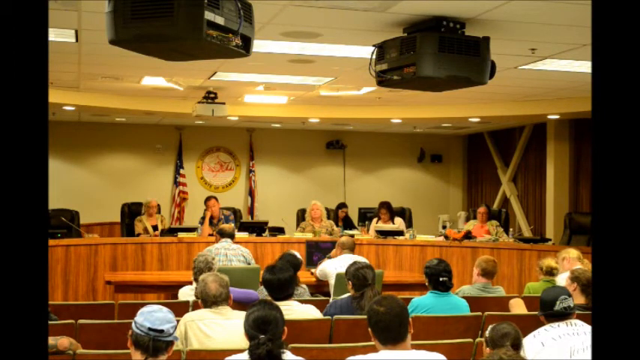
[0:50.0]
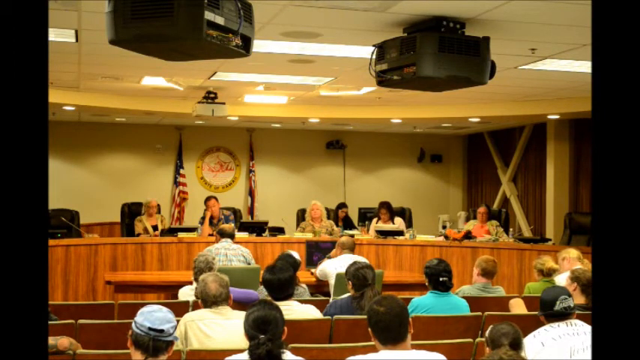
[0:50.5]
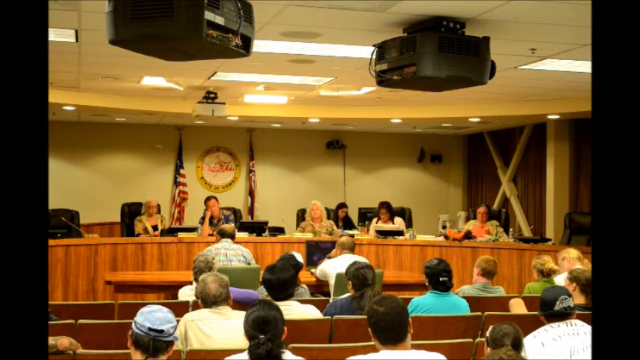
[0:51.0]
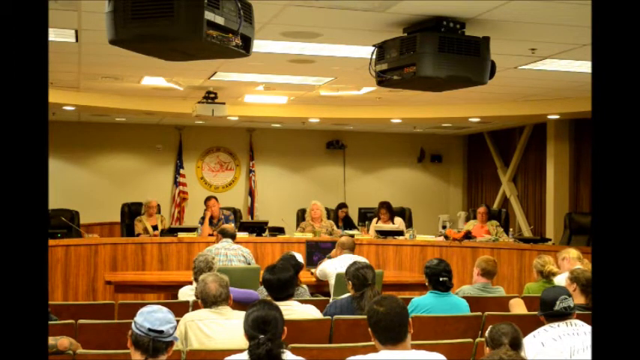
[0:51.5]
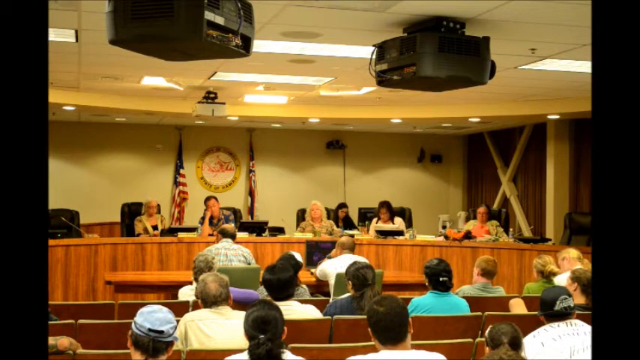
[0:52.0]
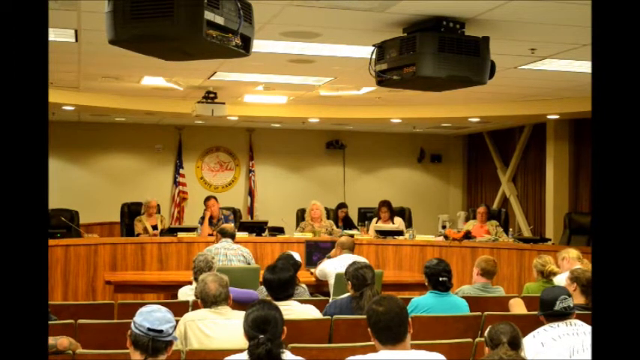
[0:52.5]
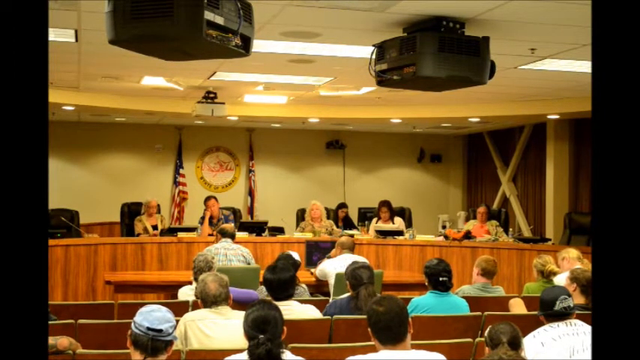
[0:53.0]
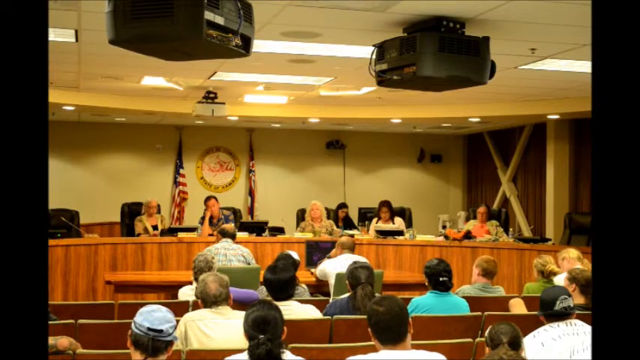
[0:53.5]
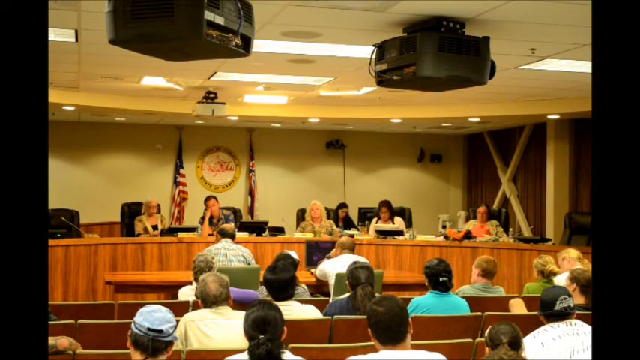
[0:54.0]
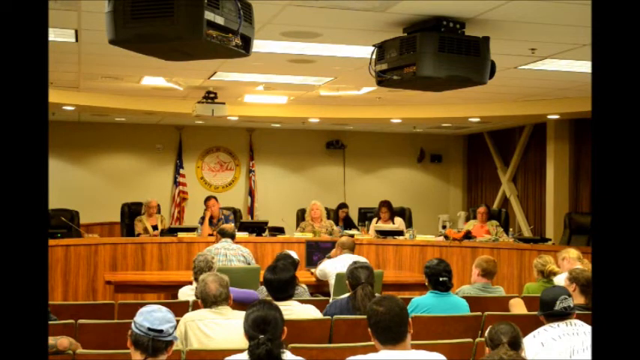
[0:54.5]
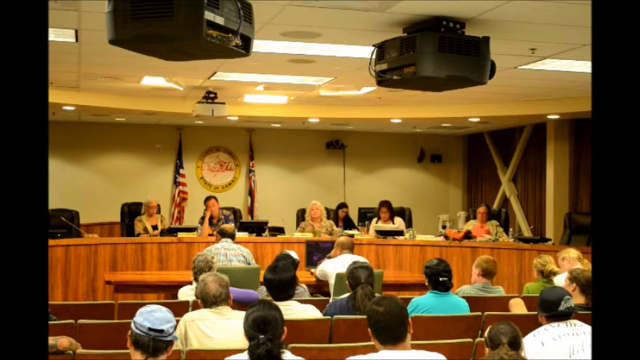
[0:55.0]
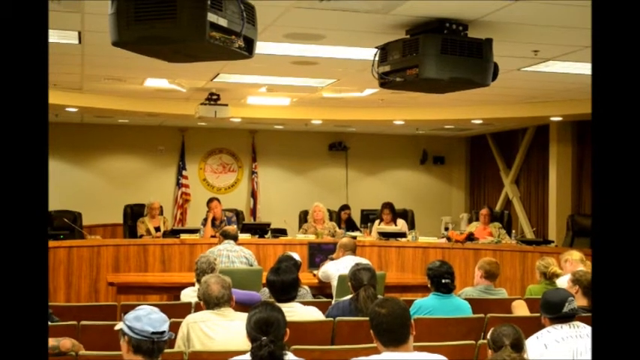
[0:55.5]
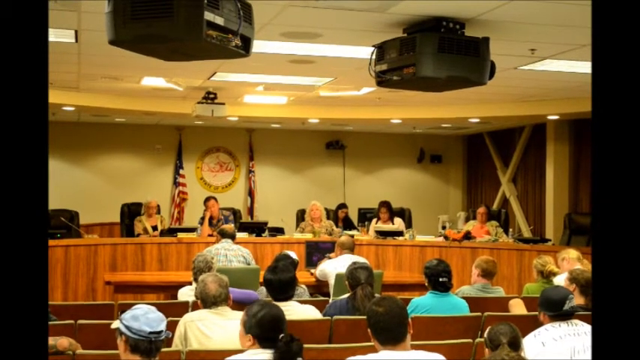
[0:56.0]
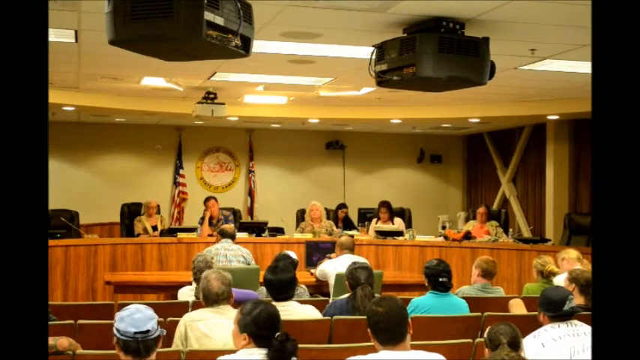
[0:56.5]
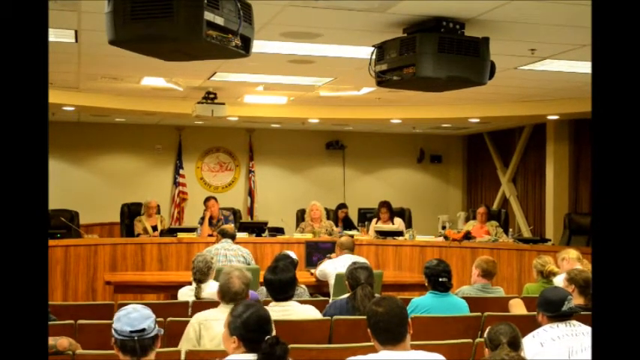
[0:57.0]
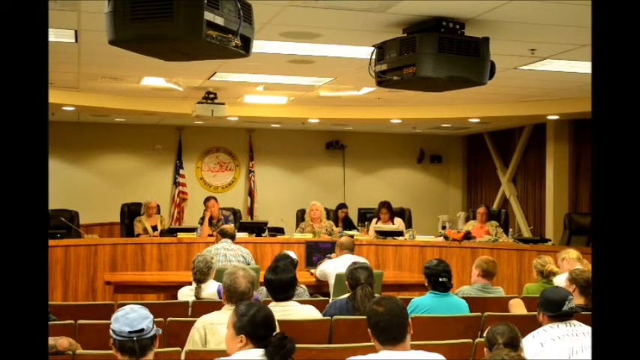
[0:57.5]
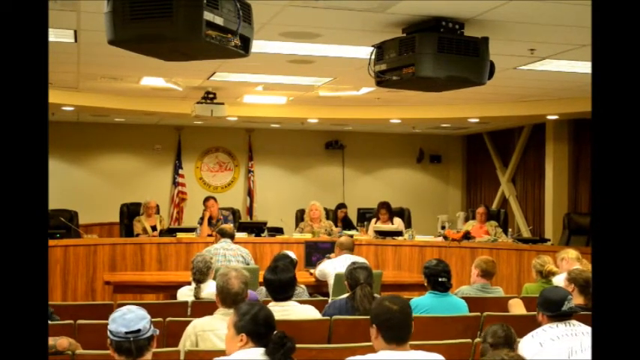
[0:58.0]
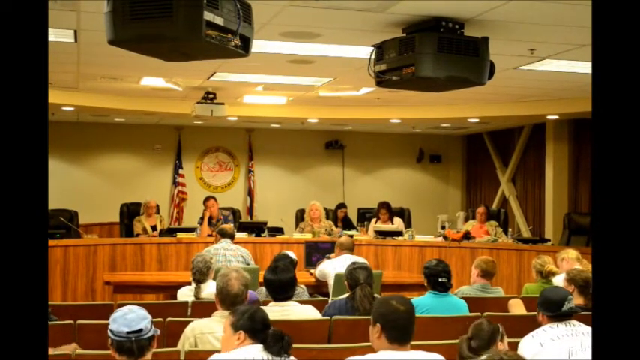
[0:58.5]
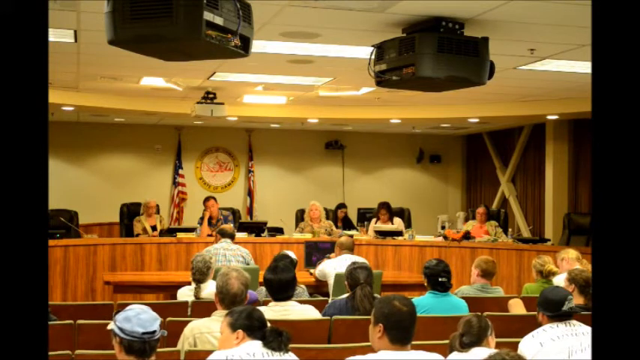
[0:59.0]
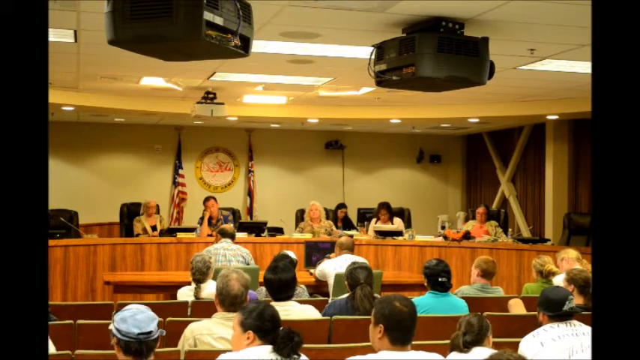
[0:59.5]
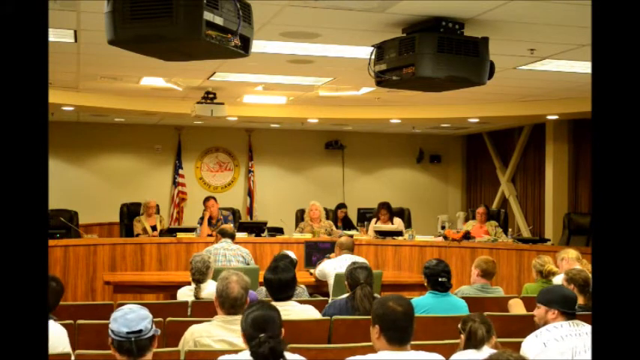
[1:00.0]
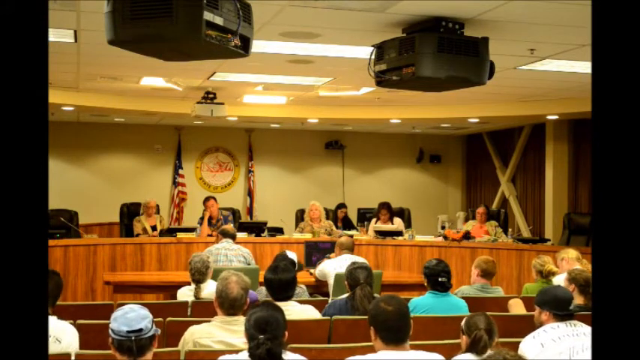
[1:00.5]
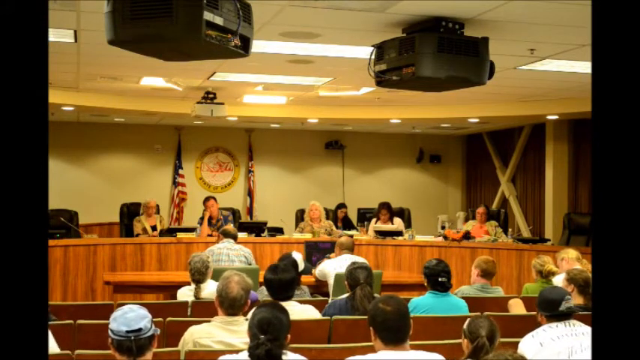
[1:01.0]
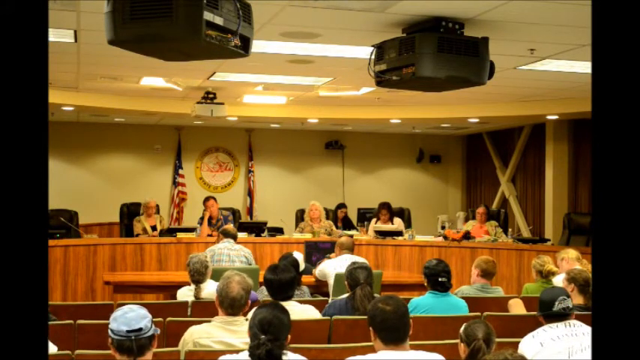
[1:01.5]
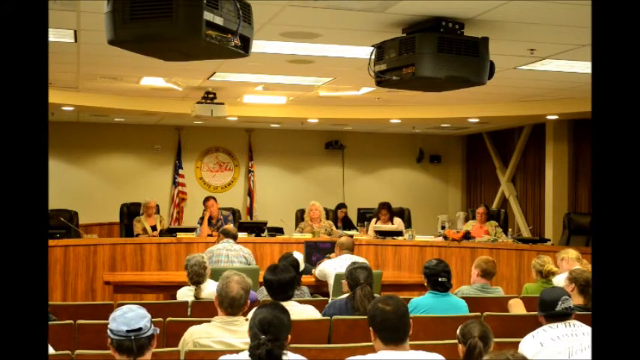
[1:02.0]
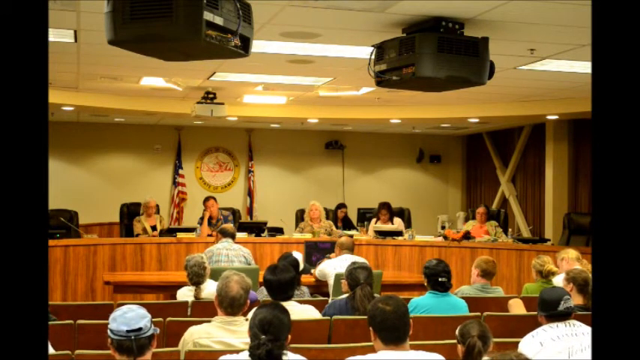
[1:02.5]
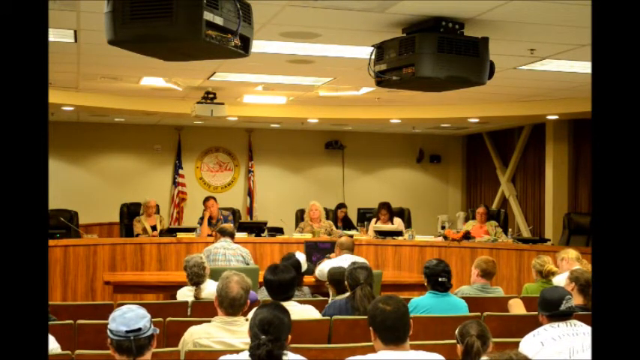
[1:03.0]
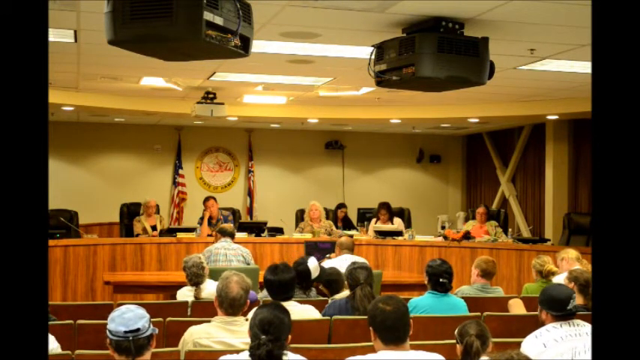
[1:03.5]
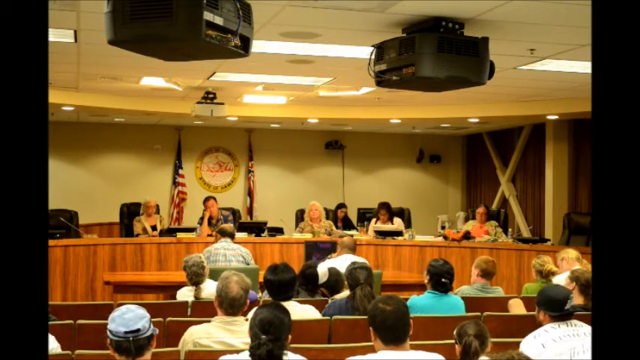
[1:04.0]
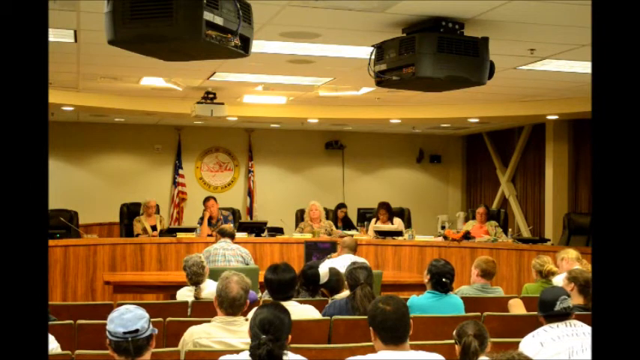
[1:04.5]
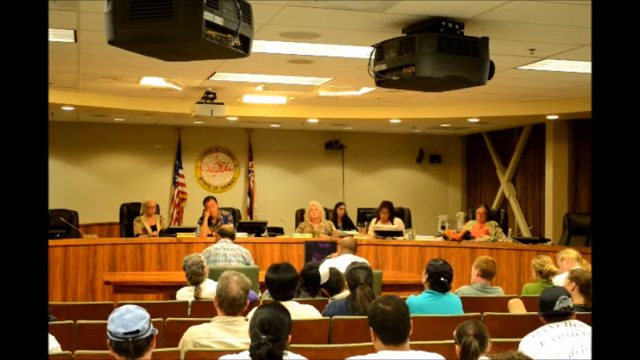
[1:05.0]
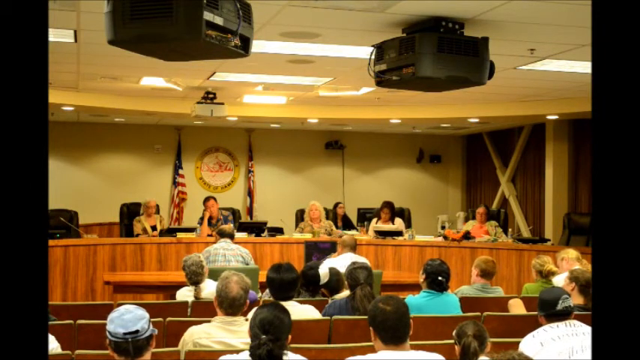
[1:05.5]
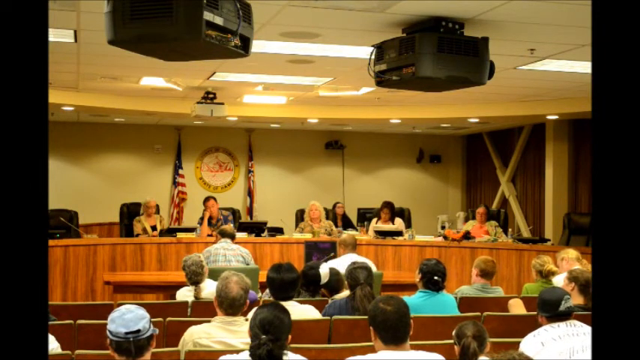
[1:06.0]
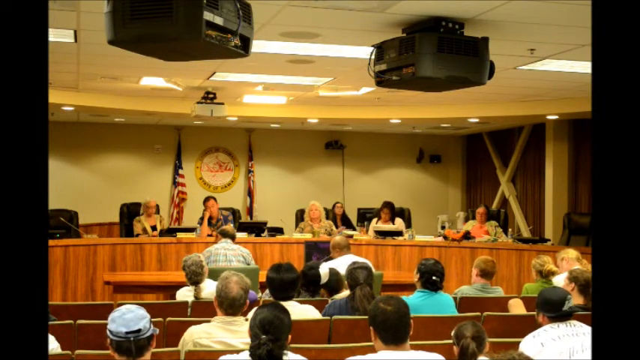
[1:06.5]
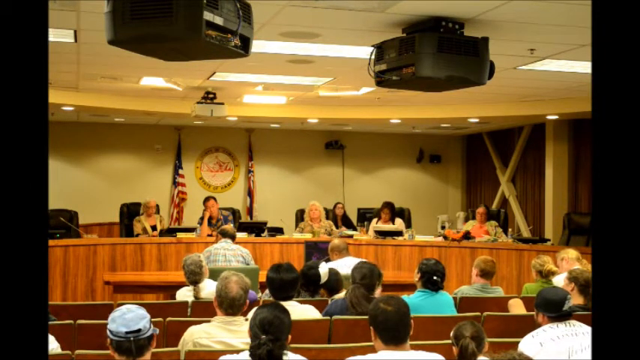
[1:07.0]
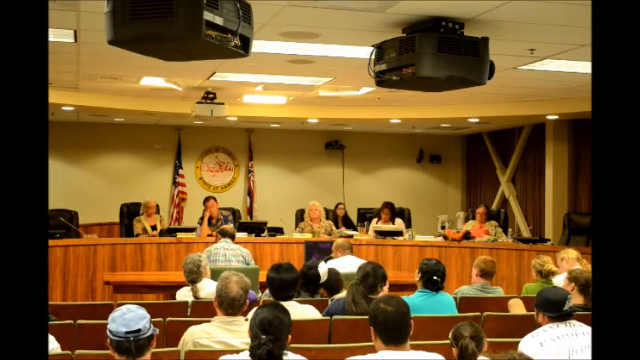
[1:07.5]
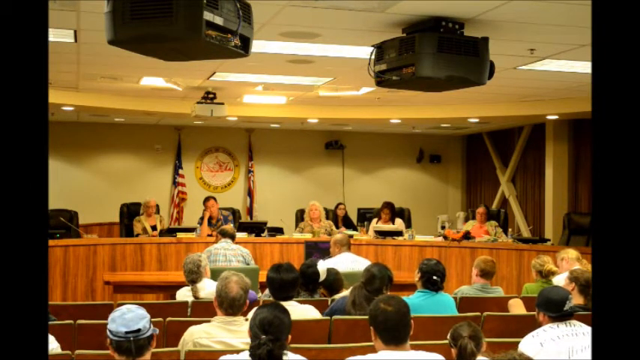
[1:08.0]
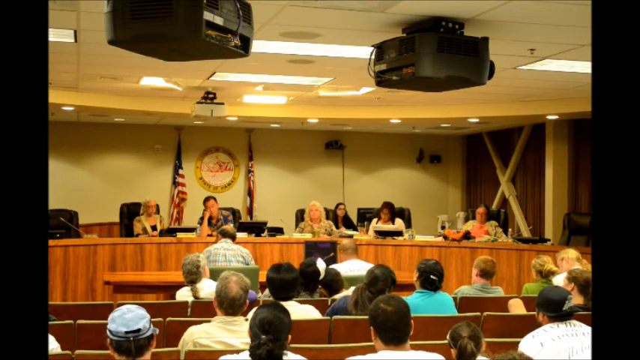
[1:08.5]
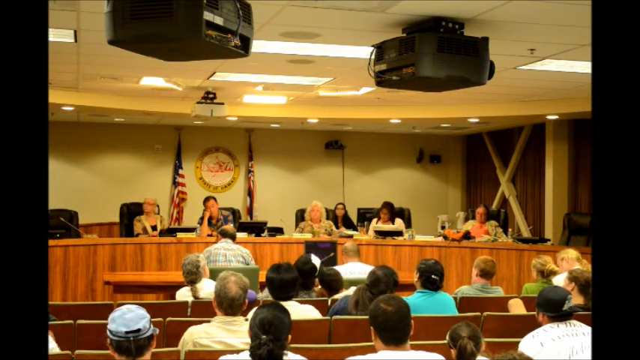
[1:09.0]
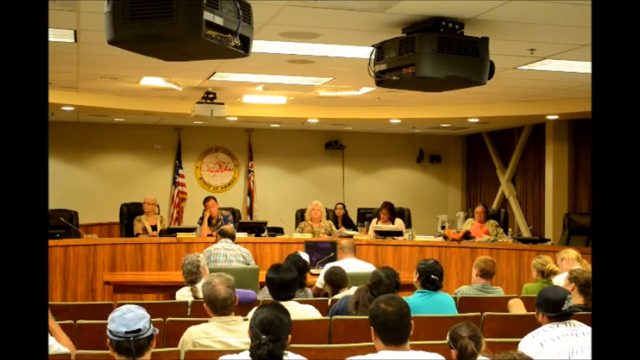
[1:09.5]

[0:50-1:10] The camera continues to focus on the people speaking. It looks like a dull conversation is all that is happening. The man sitting among the women seems bored. The room is brightly lit, yet the picture quality remains poor. There are no pop-ups or signs indicating what the meeting is about.